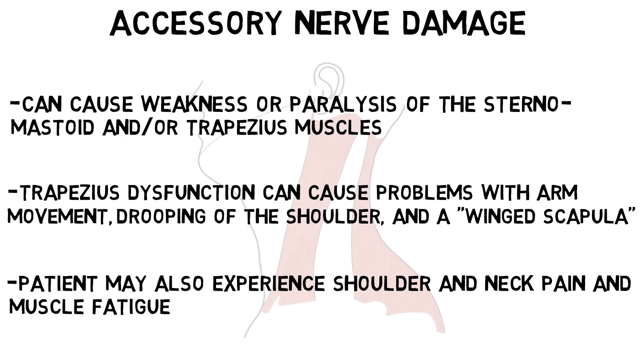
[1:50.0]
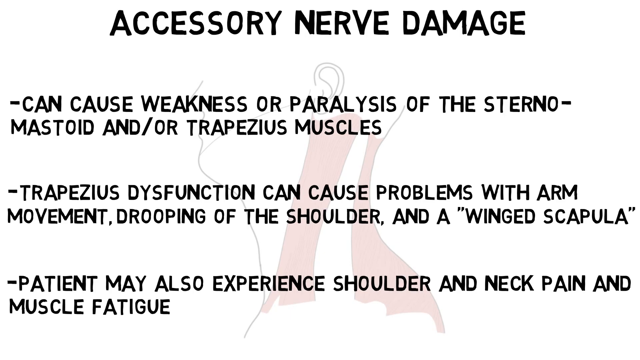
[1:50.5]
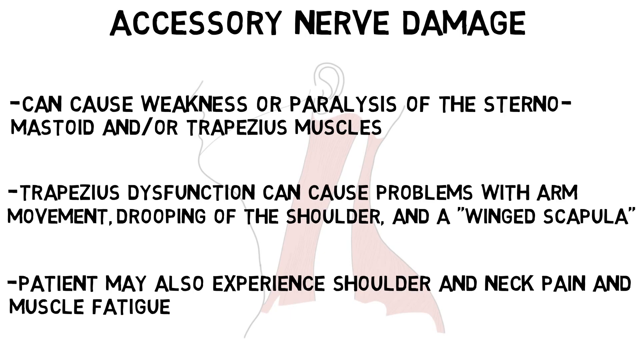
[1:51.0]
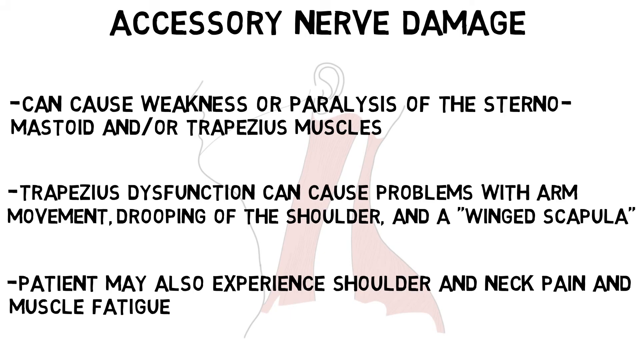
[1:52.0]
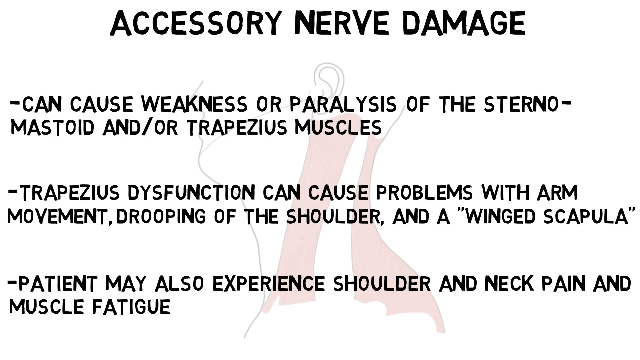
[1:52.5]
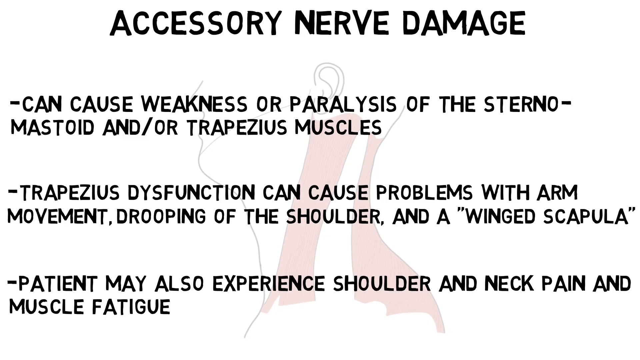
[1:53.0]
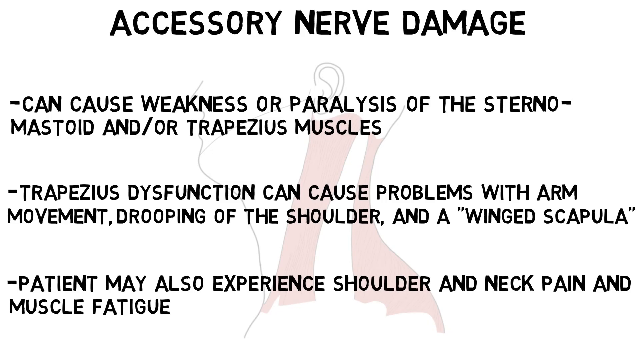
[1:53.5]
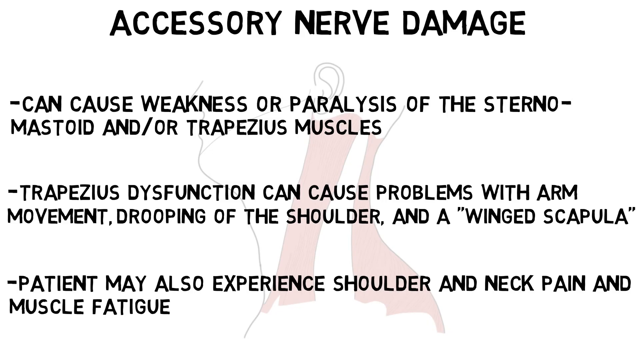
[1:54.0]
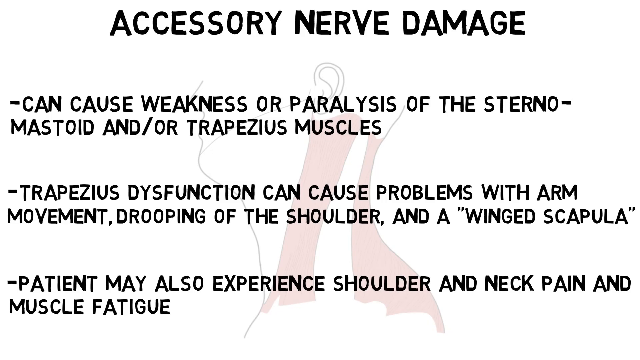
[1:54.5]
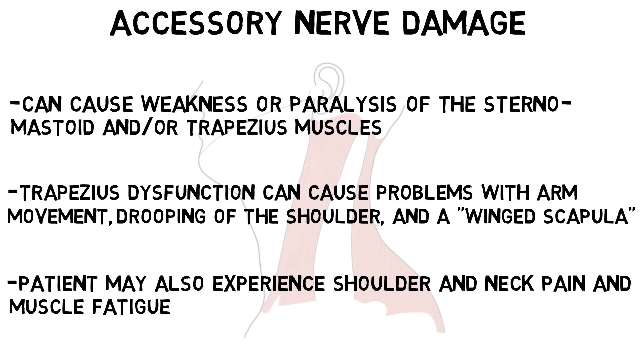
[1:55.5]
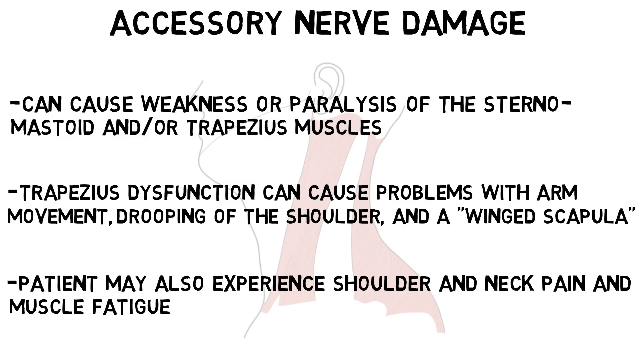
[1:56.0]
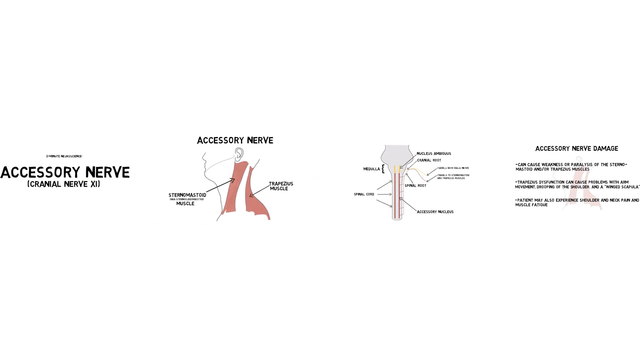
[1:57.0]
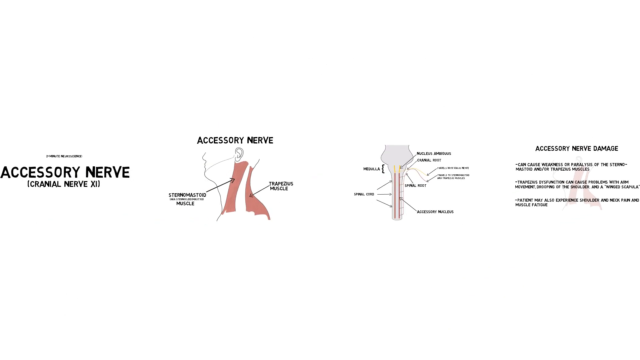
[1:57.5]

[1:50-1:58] The text on screen says "Accessory Nerve Damage can cause weakness or paralysis of the Sternal Mastoid and or Trapezius Muscles. Trapezius Dysfunction can cause problems with arm movement, drooping of the shoulder, and a 'winged scapula'. Patients may also experience shoulder and neck pain plus muscle fatigue."